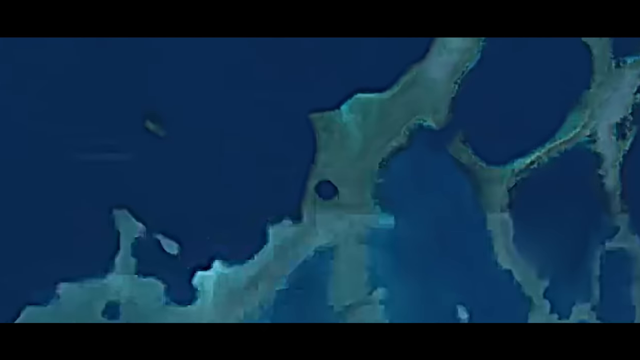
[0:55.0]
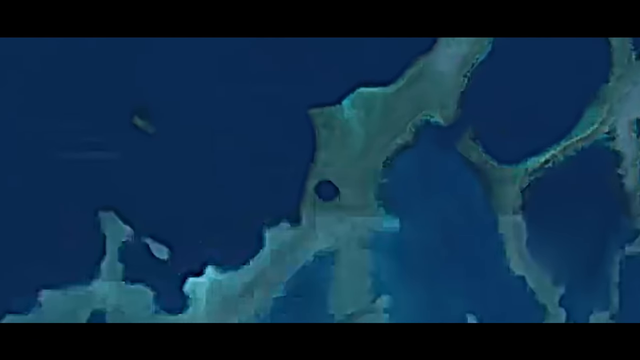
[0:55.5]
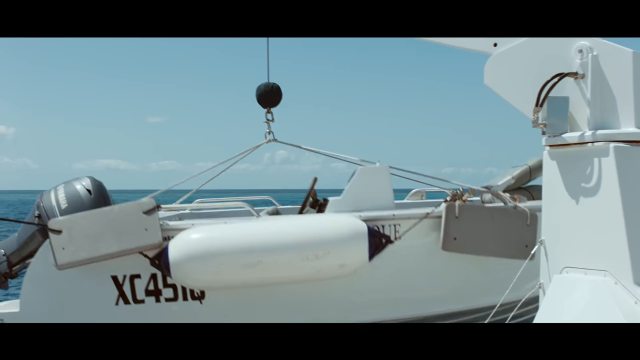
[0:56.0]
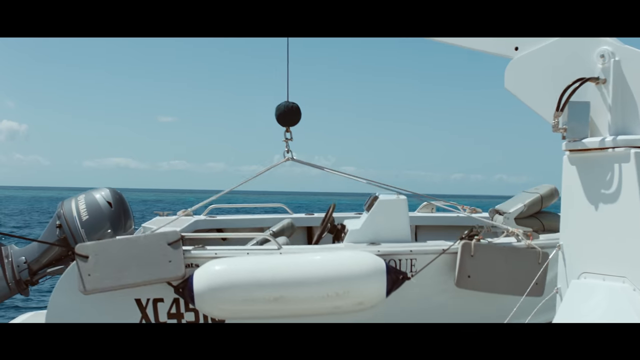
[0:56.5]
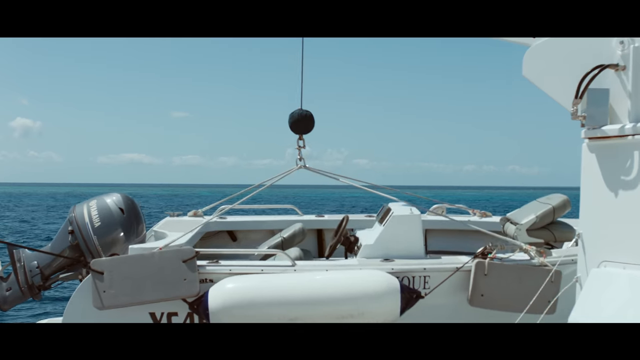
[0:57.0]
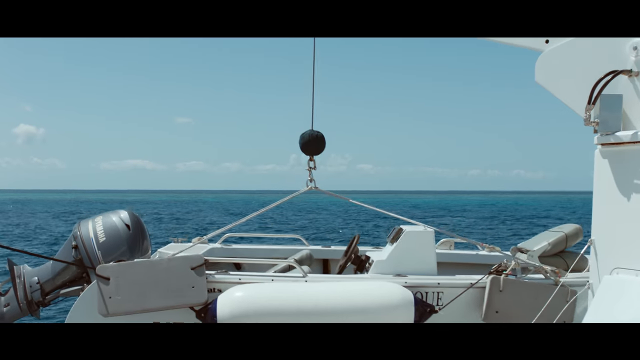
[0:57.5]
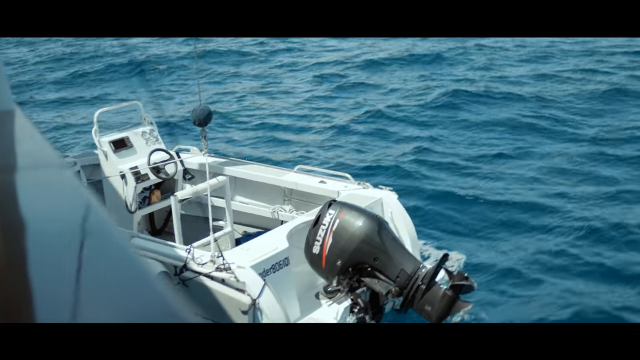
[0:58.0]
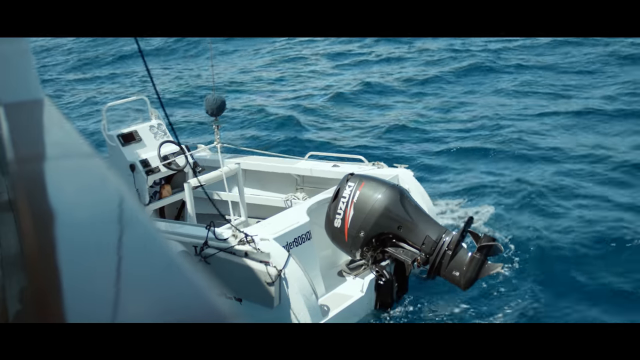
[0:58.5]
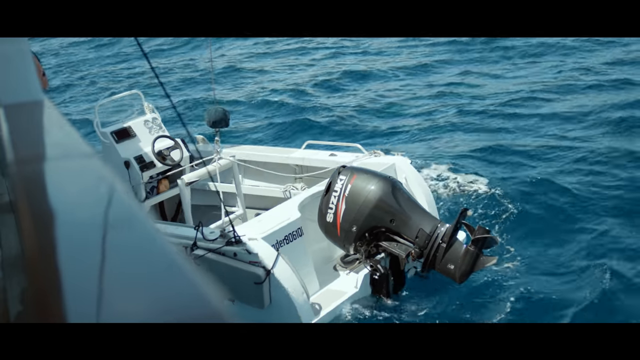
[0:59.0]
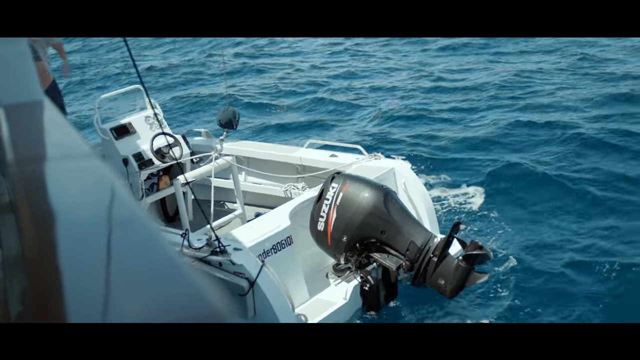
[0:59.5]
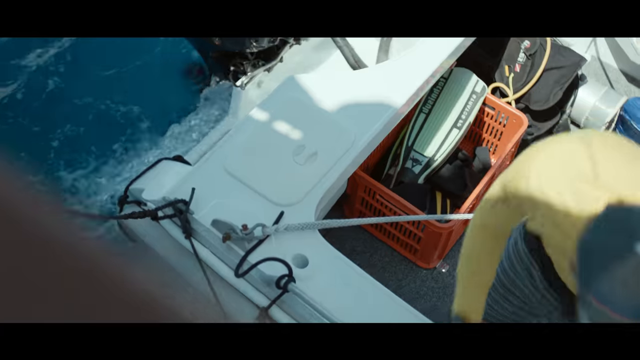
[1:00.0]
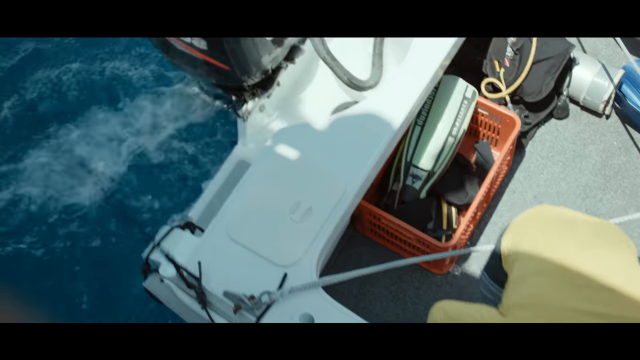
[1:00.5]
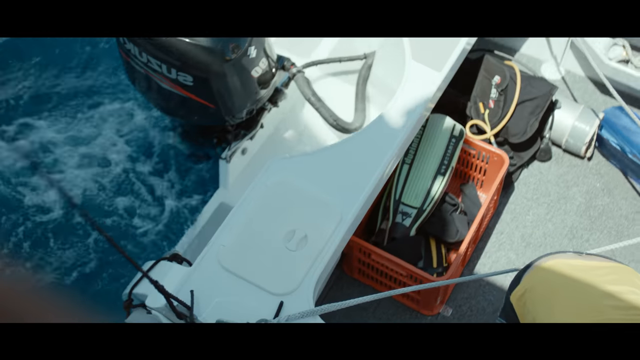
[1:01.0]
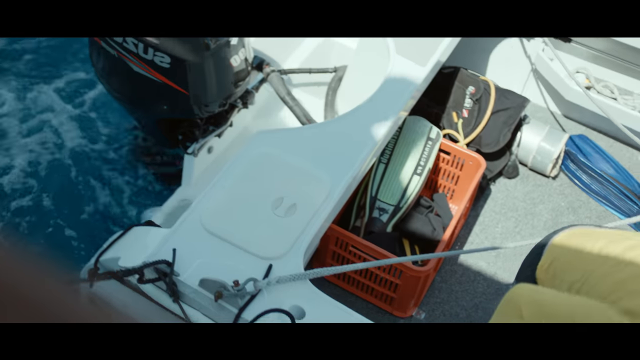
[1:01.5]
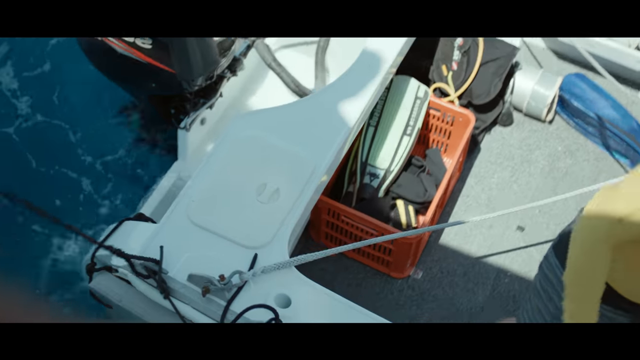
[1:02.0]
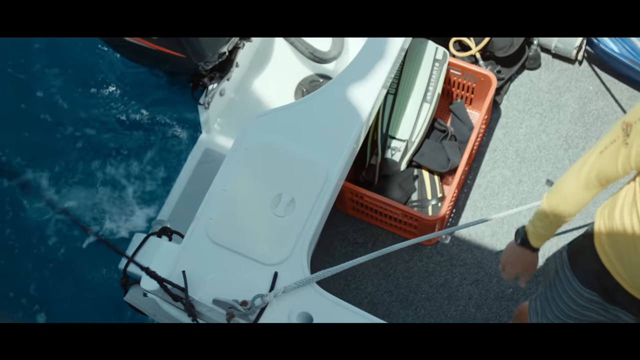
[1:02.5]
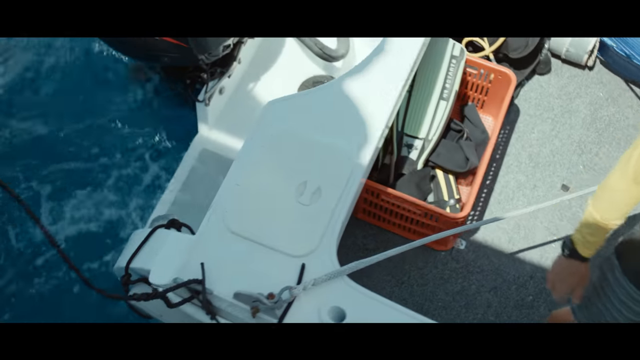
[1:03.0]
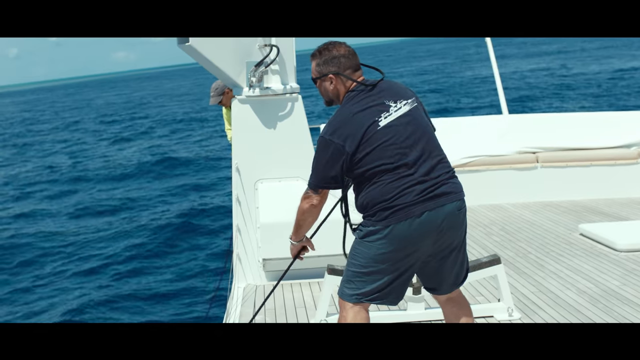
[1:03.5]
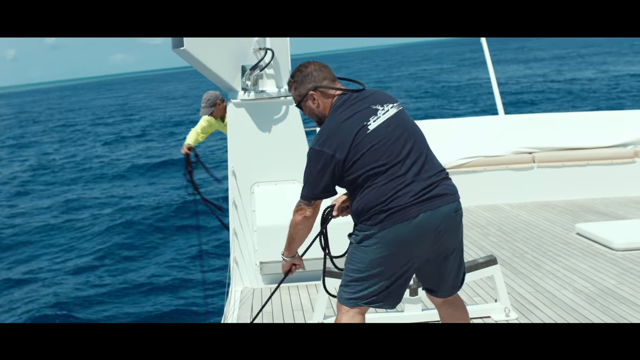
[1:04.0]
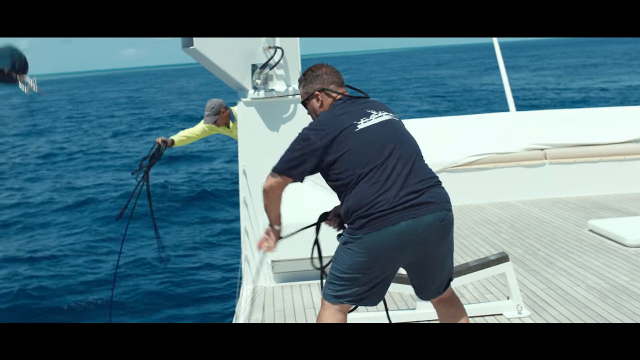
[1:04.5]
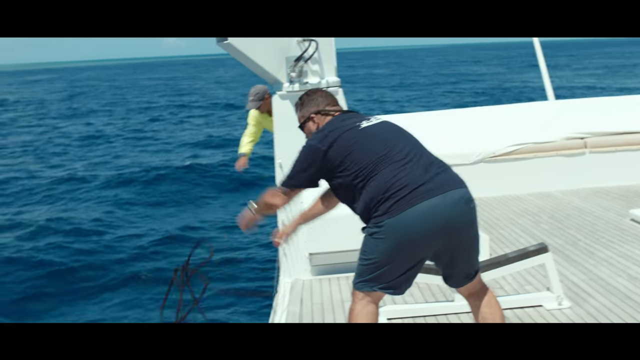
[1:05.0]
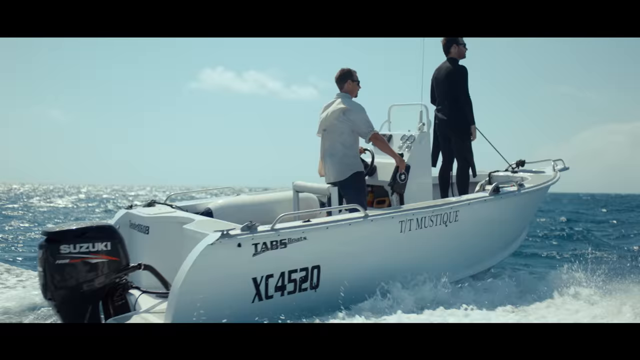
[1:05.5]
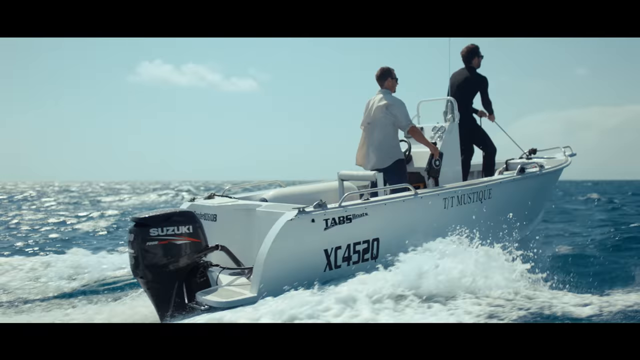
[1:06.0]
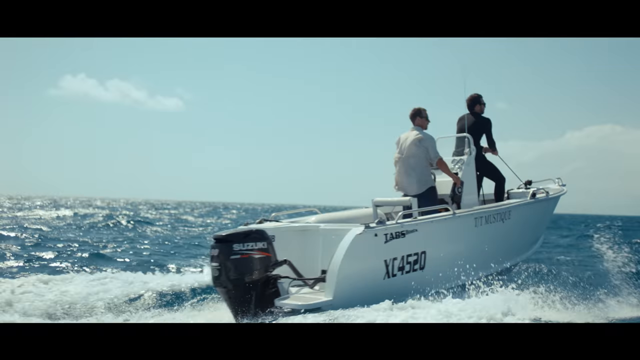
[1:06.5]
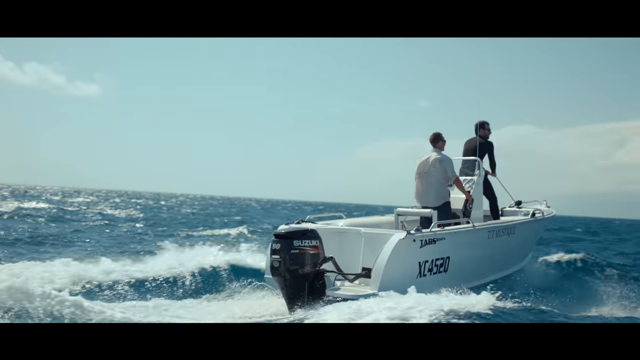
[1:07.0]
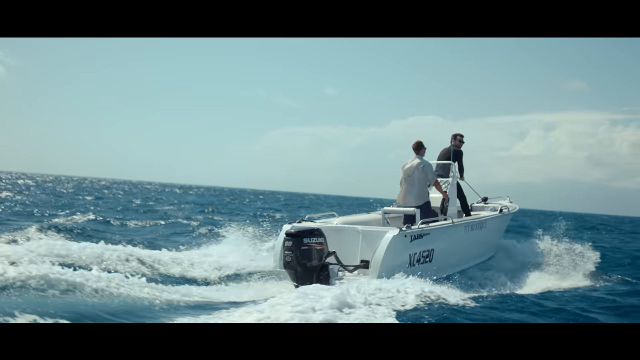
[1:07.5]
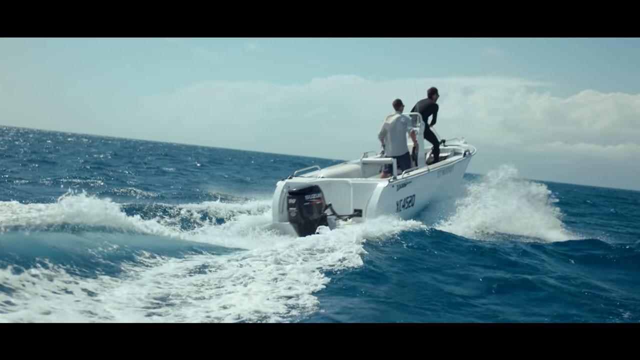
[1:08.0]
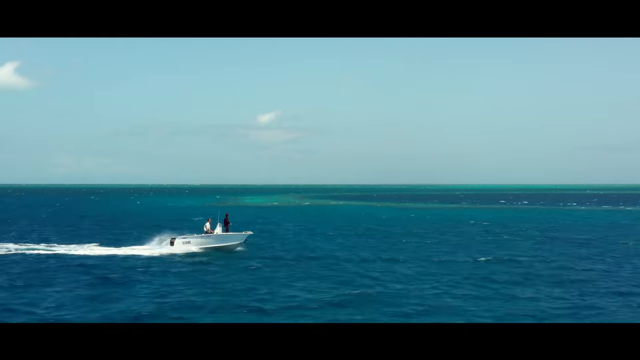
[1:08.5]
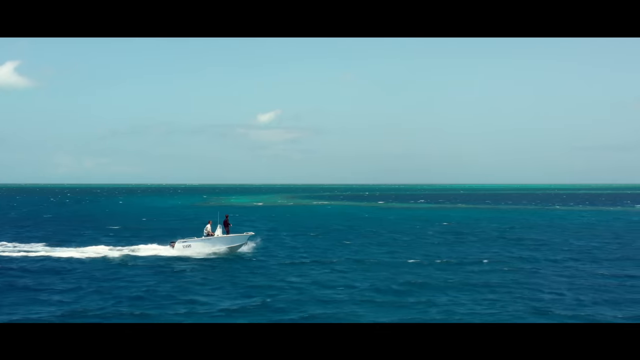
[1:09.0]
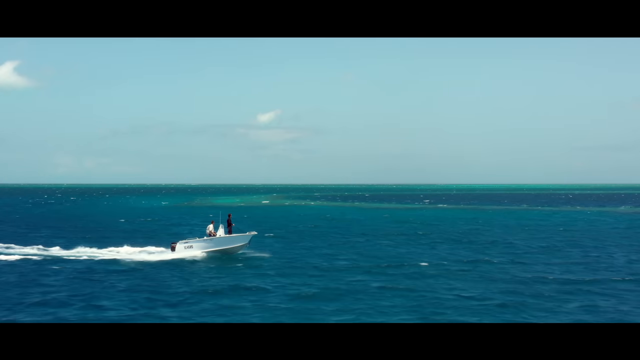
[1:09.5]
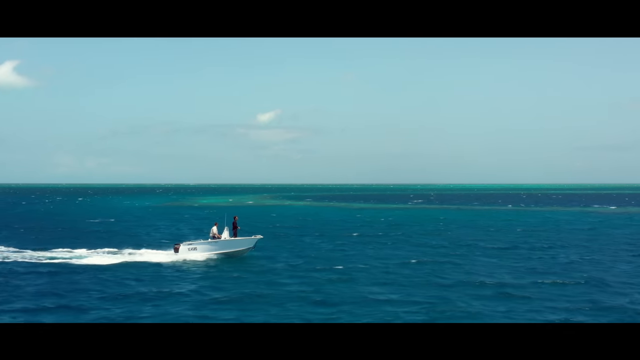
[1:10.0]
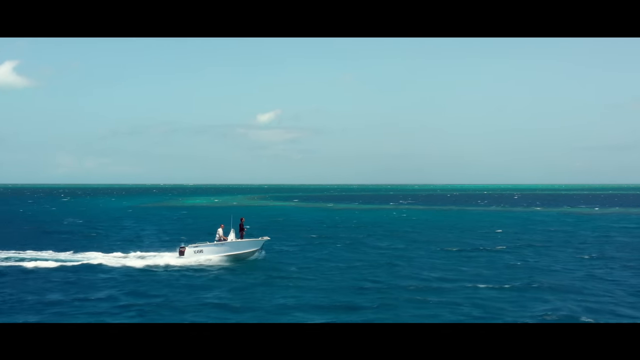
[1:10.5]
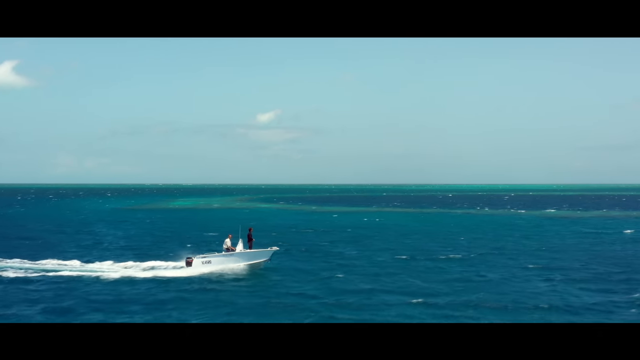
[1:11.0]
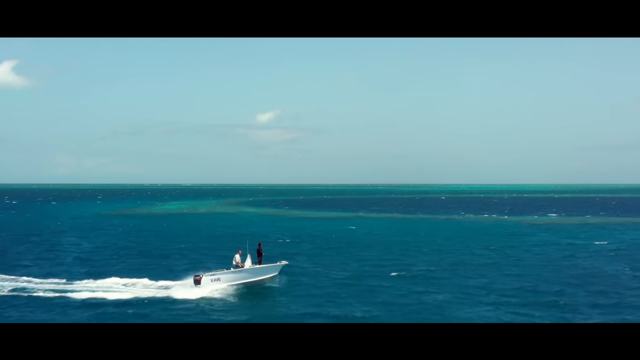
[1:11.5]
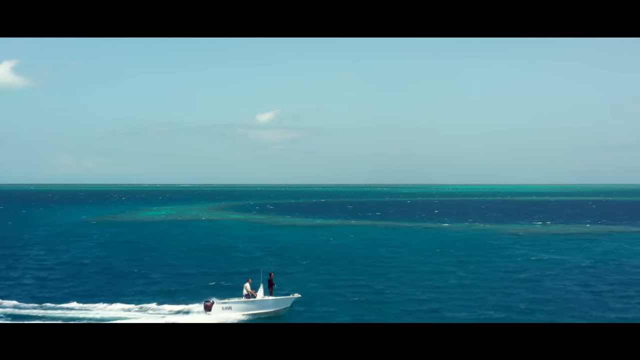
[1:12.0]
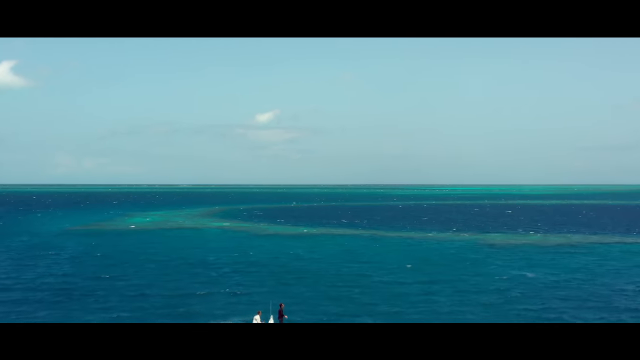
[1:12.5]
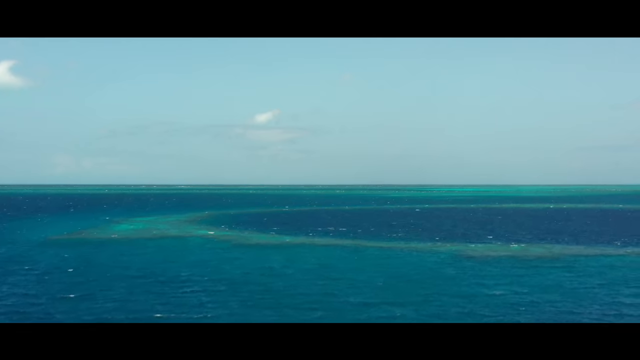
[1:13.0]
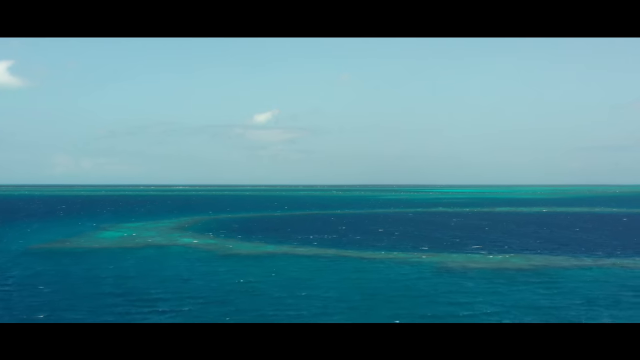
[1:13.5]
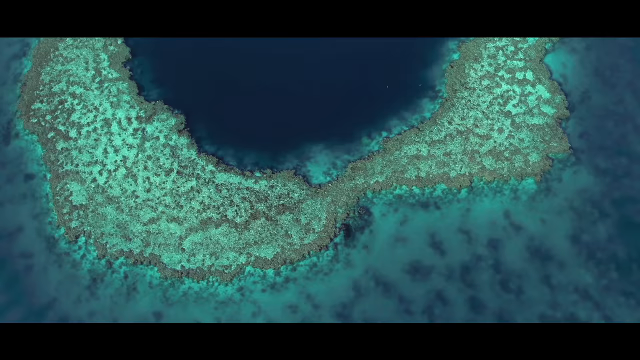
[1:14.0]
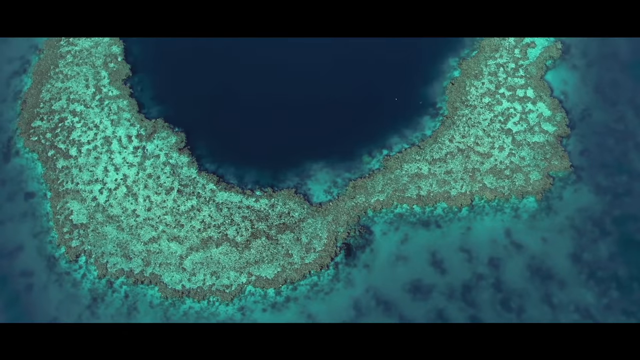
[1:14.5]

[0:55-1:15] A smaller boat is lowered into the water, which is blue and slightly choppy. The boat is white with a little black motor, and two men are on it. It goes at a much faster pace than the larger boat, headed to what looks to be a blue hole in the ocean. Inside the boat is a red, sort of milk-crate-type crate holding black swim fins and other tools for the divers. The blue hole is surrounded by sand and coral reefs spreading outward from it. The two men on the boat are both middle-aged Caucasian men, and two other middle-aged Caucasian men are on the larger ship that dropped the smaller speedboat. One of the men wears a yellow long-sleeved shirt, gray shorts, and a black watch, what looks to be some sort of Fitbit, on his left wrist. The other man wears a black t-shirt with white writing.